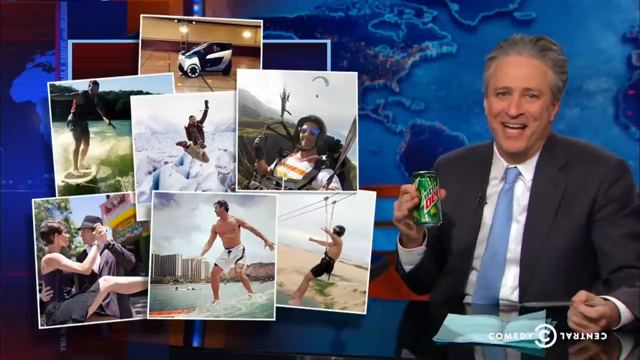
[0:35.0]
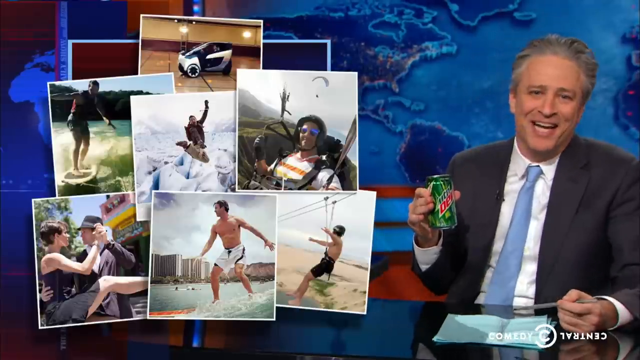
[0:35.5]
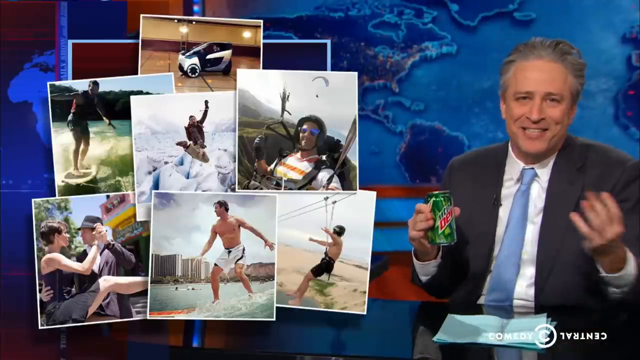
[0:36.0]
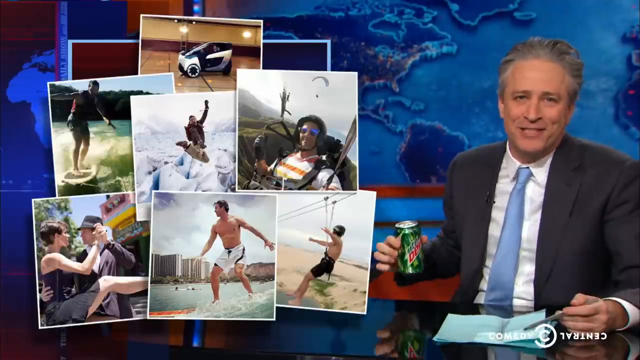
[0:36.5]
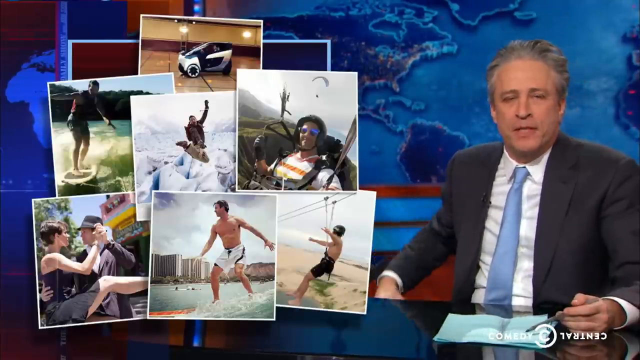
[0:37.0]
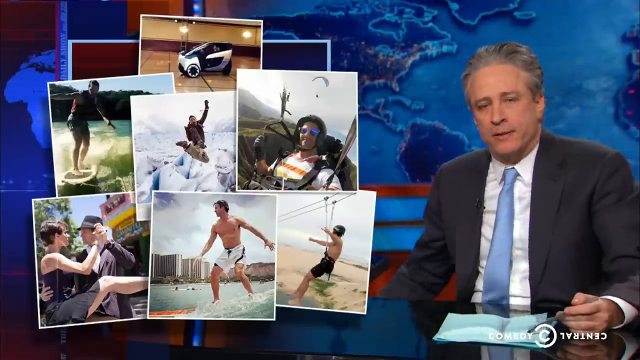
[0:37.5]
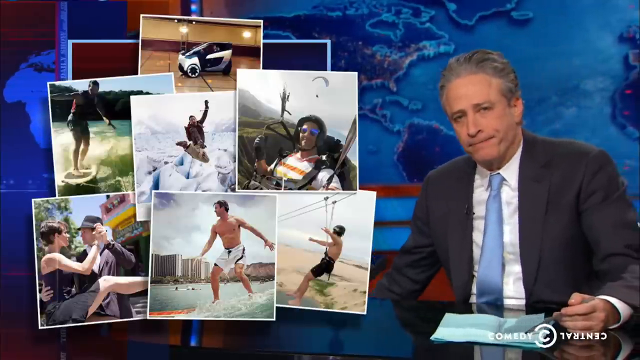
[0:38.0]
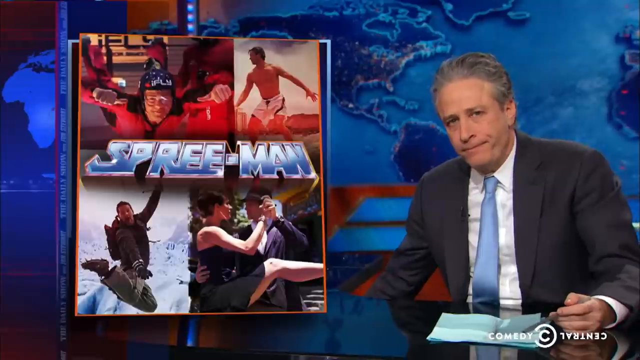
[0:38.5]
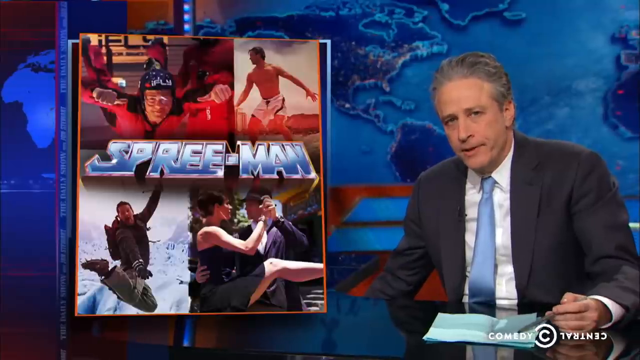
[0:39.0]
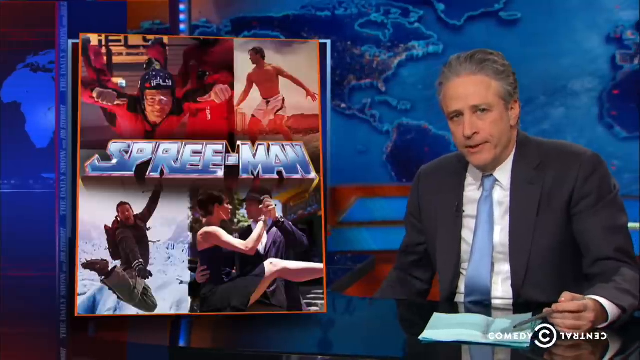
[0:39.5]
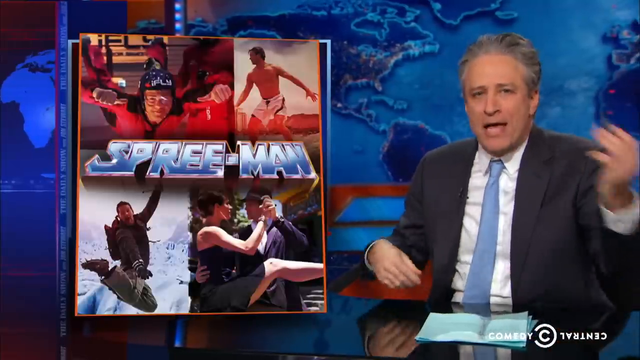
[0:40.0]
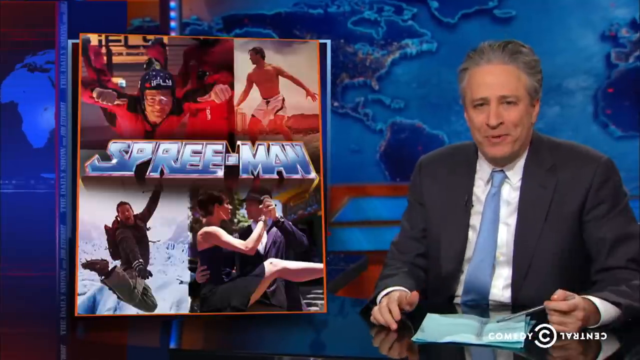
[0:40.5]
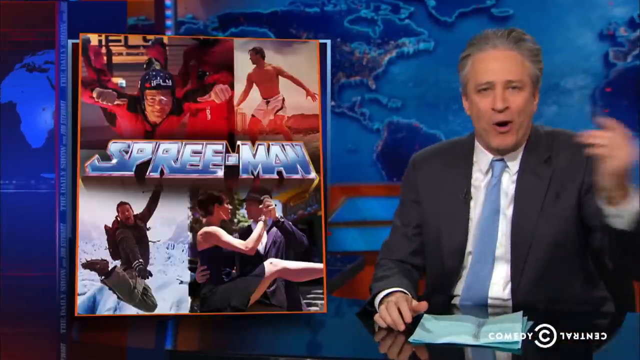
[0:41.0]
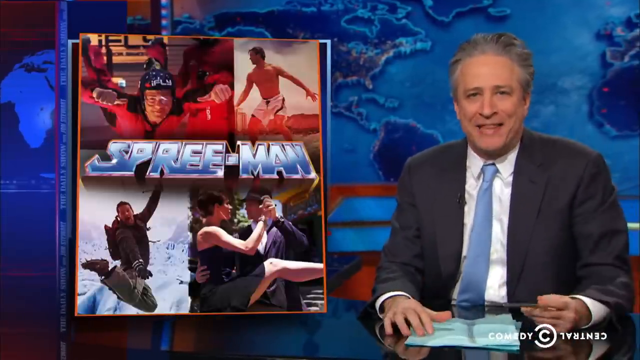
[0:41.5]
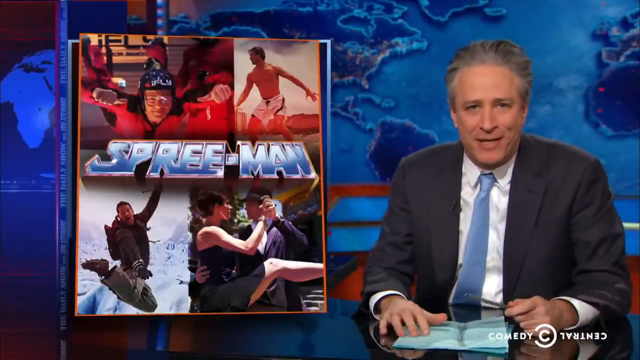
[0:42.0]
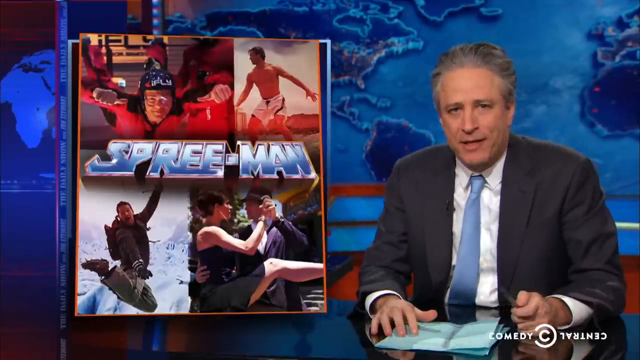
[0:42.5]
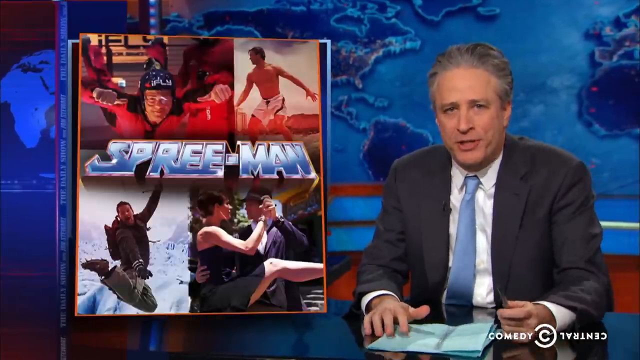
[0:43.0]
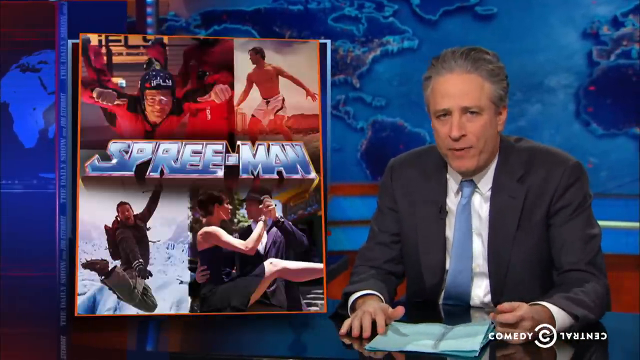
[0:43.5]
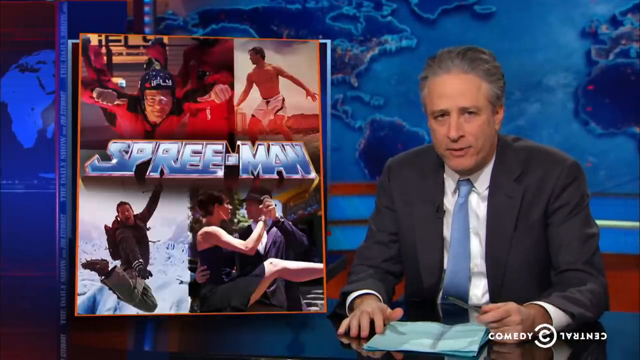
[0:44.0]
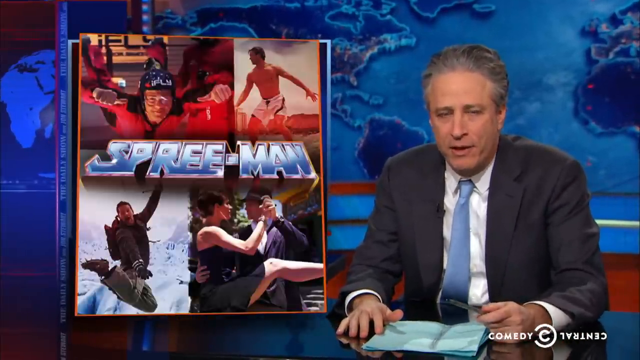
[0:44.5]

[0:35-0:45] Jon Stewart sits at his desk on The Daily Show. On the left side of the screen is a collage of pictures and videos of the congressperson Aaron Schock on his vacations; on the right side, Jon Stewart holds a can of Mountain Dew, then puts the can back under the table. The graphic on the left changes and calls him "Spree Man," while still showing images of him at a glacier, at a beach, and doing various activities on vacation. Stewart keeps talking, apparently calling him Spree Man.